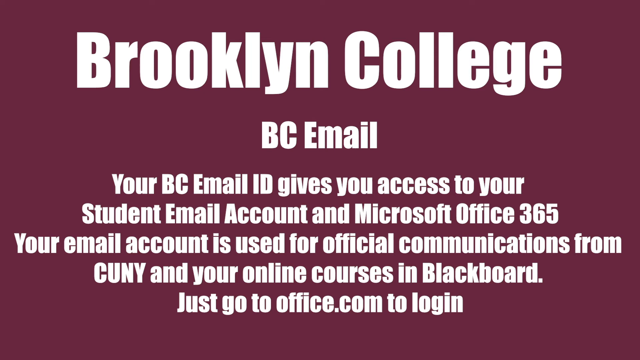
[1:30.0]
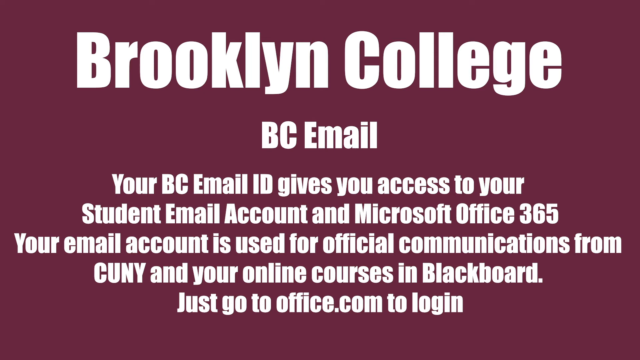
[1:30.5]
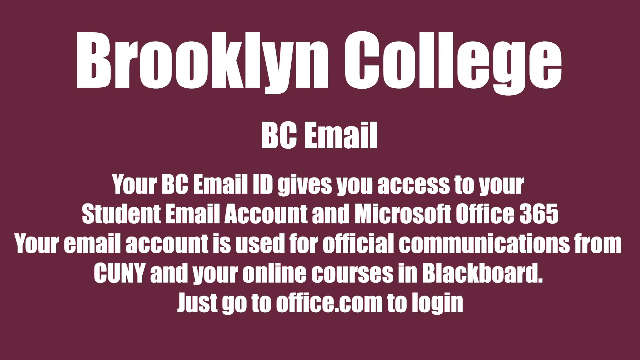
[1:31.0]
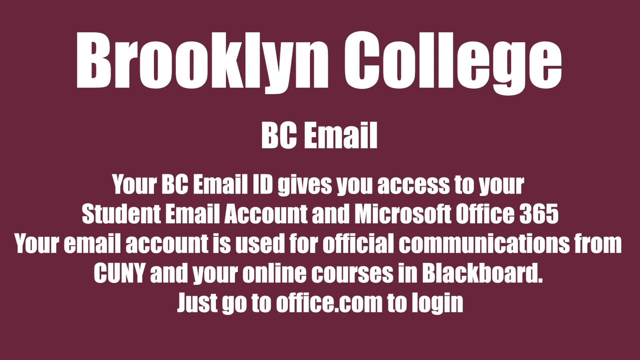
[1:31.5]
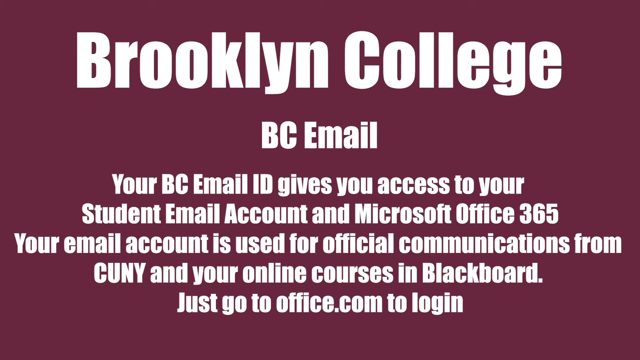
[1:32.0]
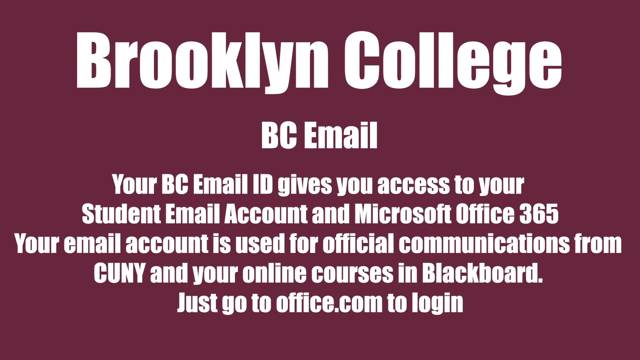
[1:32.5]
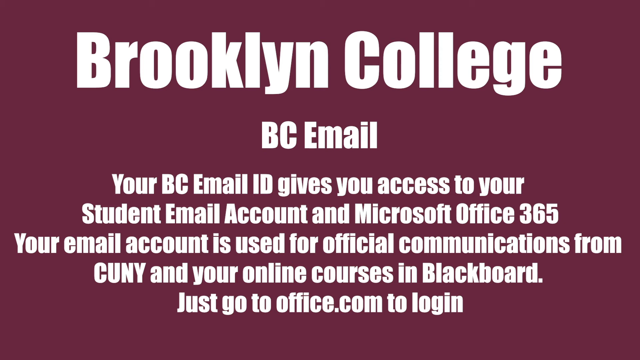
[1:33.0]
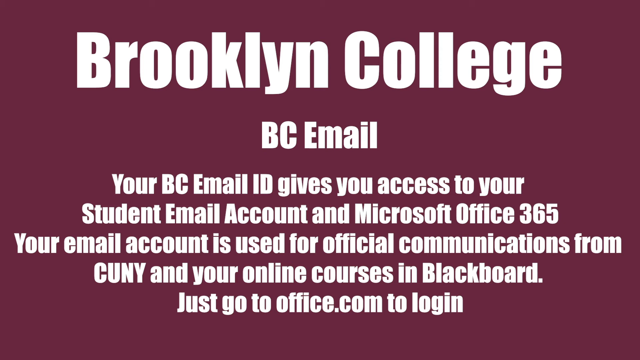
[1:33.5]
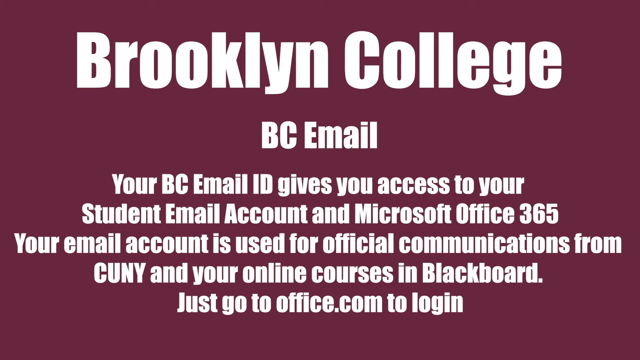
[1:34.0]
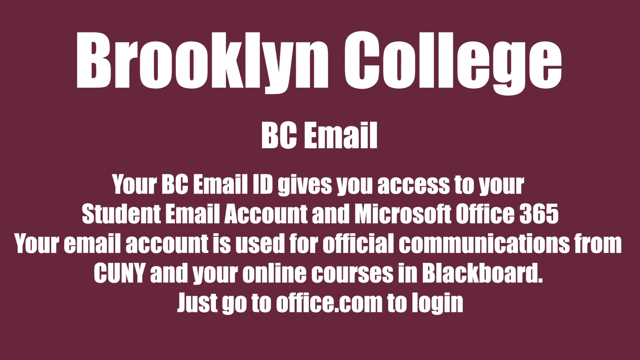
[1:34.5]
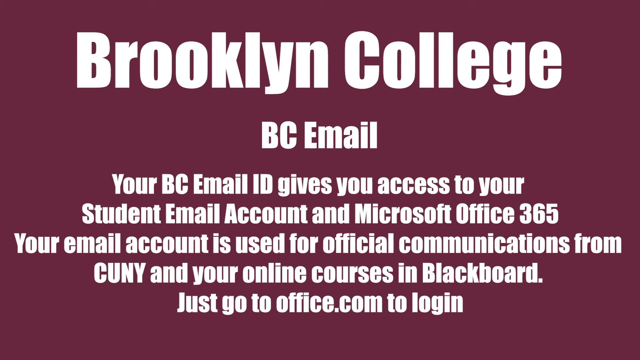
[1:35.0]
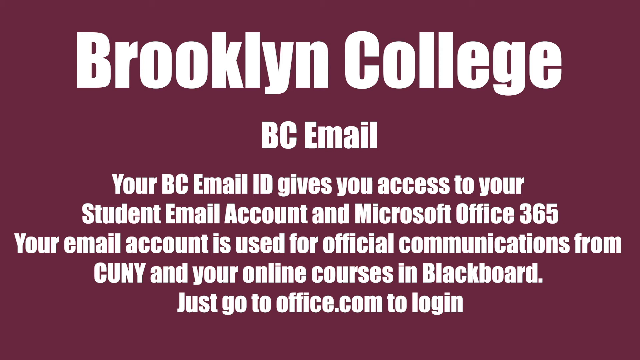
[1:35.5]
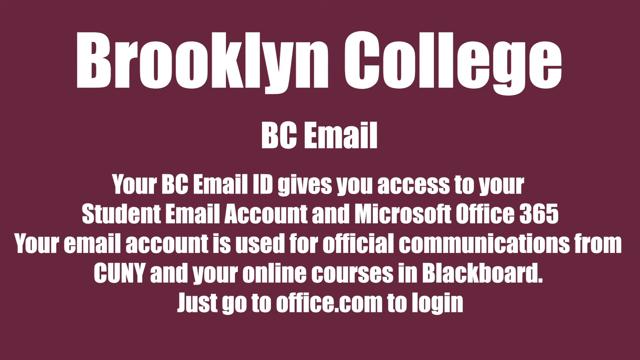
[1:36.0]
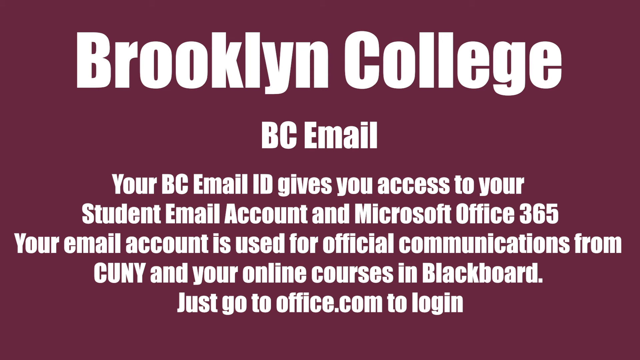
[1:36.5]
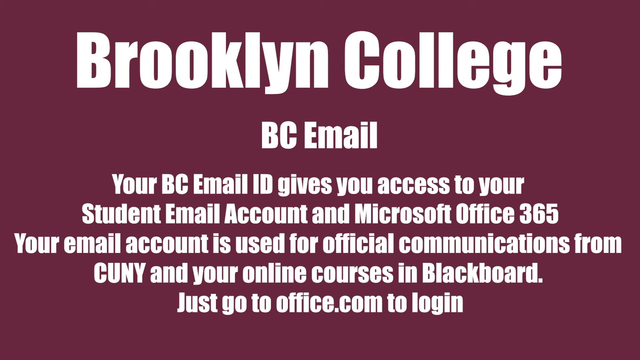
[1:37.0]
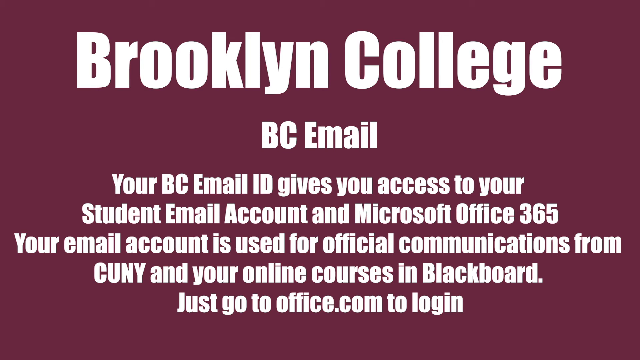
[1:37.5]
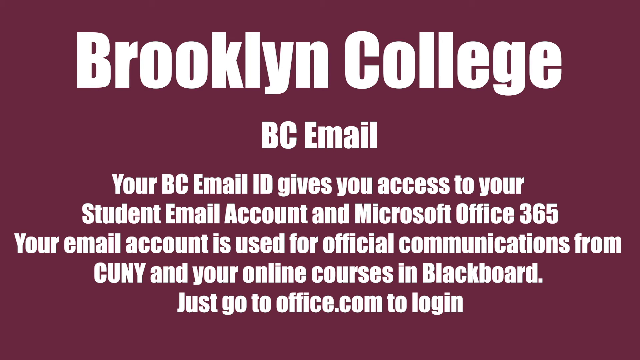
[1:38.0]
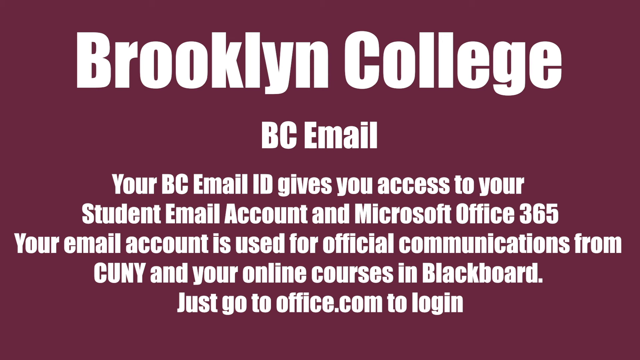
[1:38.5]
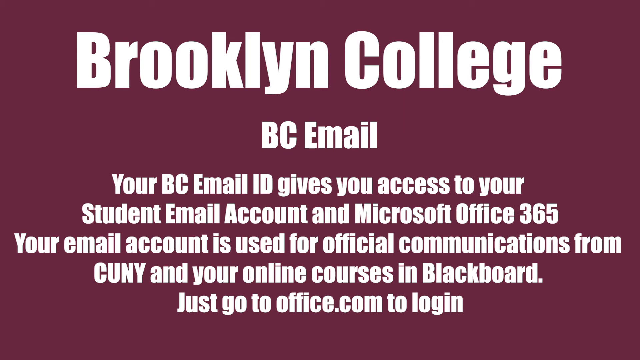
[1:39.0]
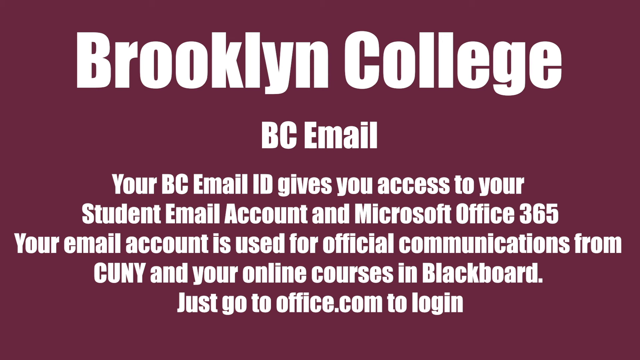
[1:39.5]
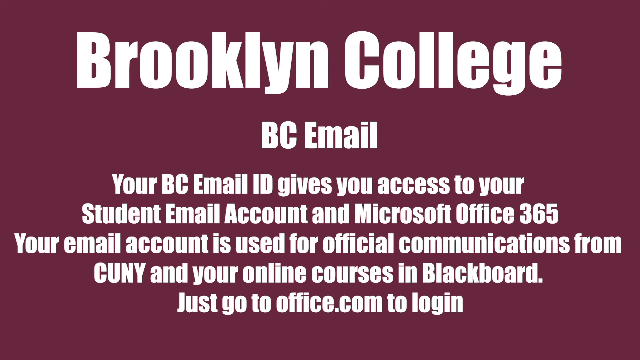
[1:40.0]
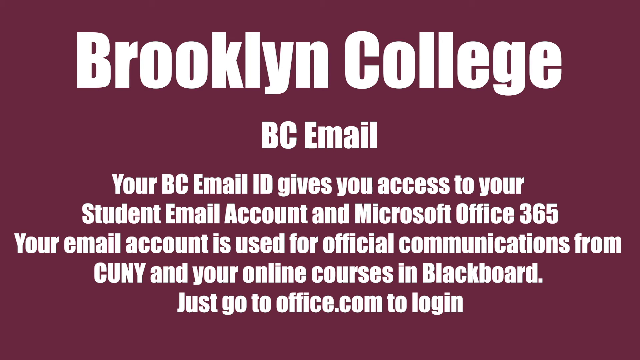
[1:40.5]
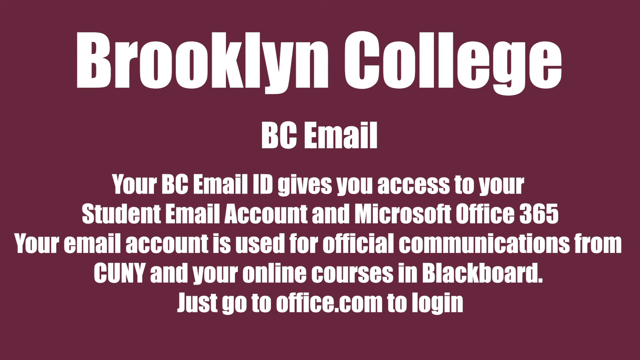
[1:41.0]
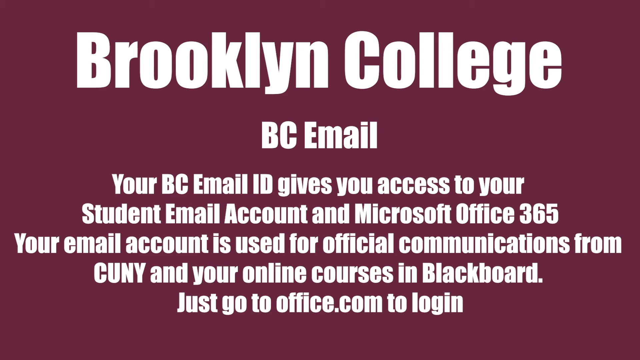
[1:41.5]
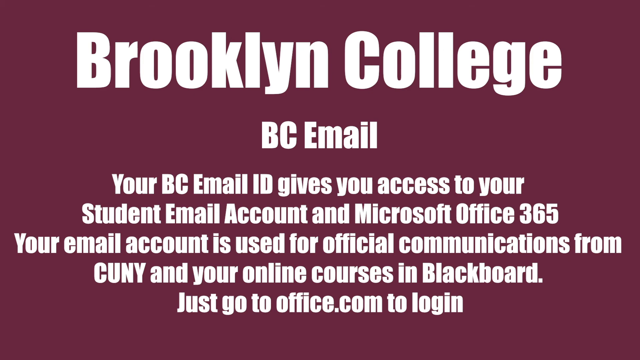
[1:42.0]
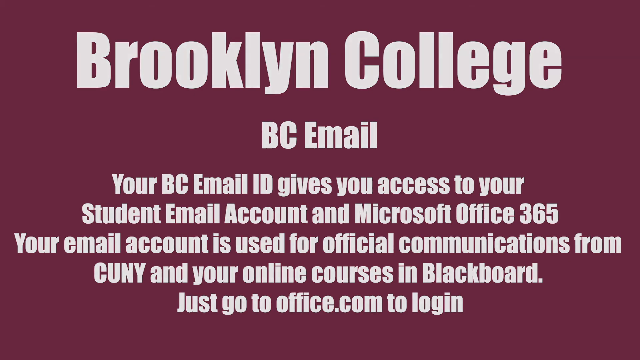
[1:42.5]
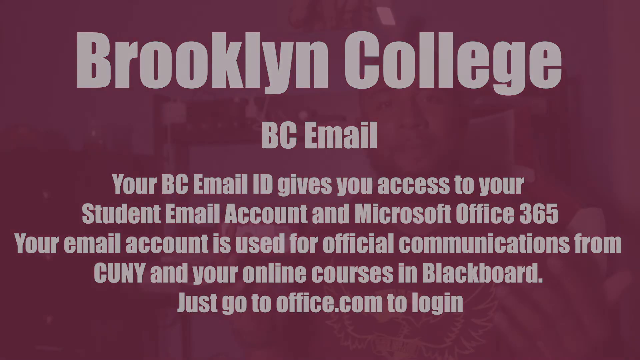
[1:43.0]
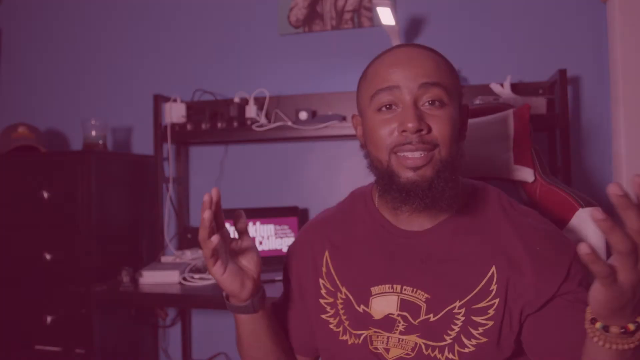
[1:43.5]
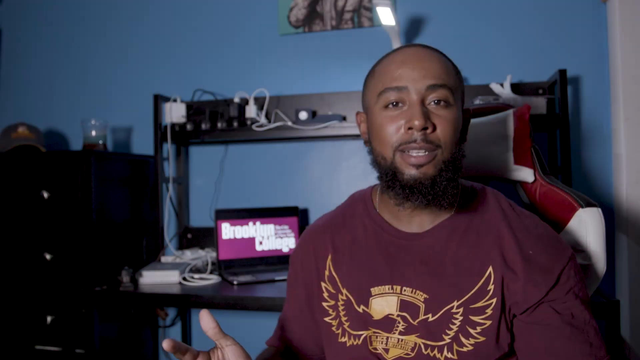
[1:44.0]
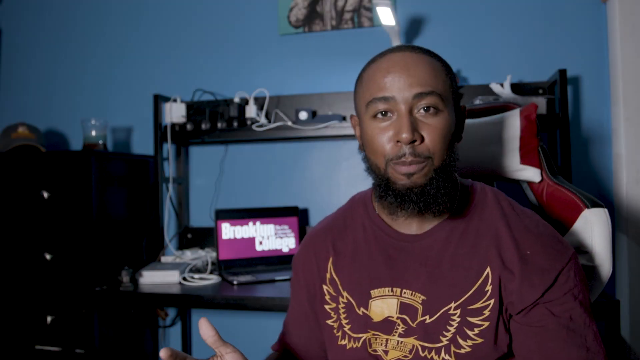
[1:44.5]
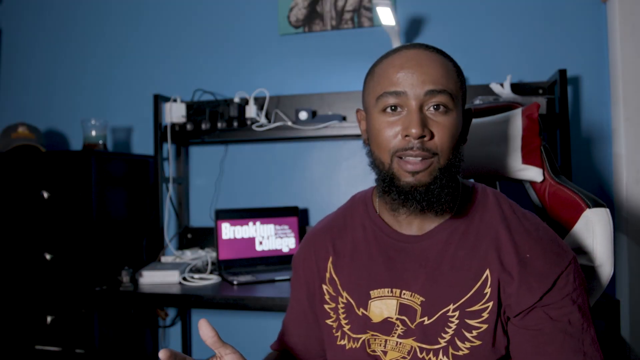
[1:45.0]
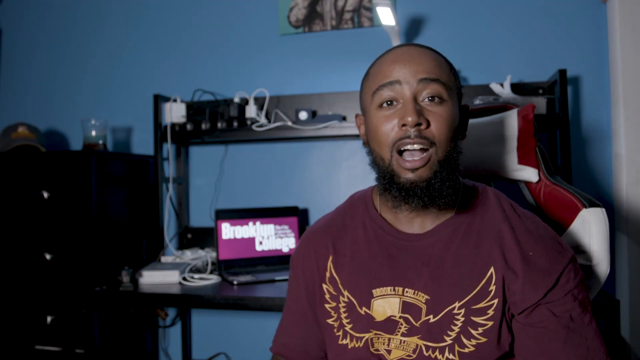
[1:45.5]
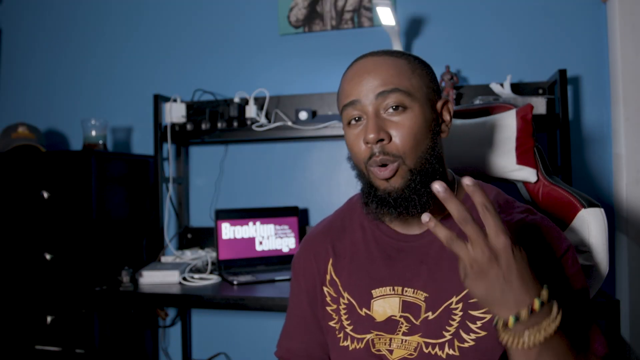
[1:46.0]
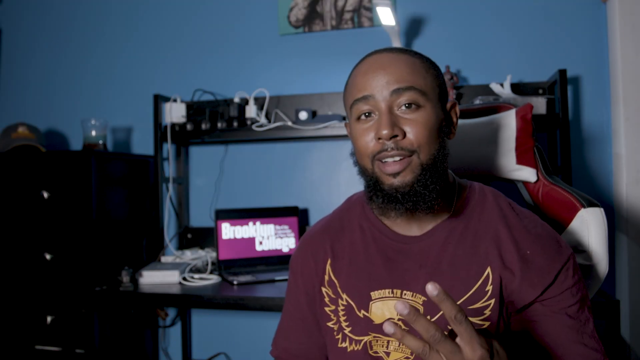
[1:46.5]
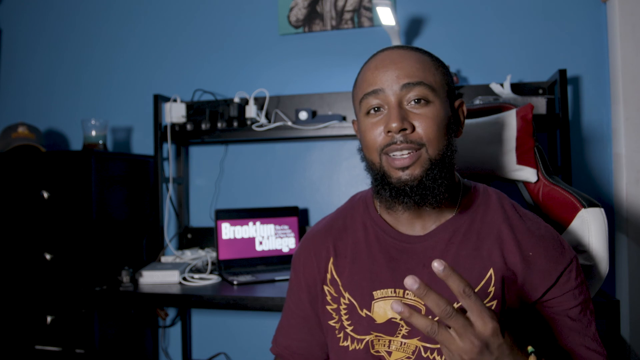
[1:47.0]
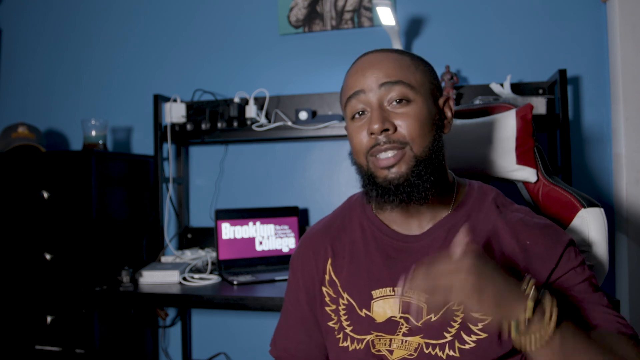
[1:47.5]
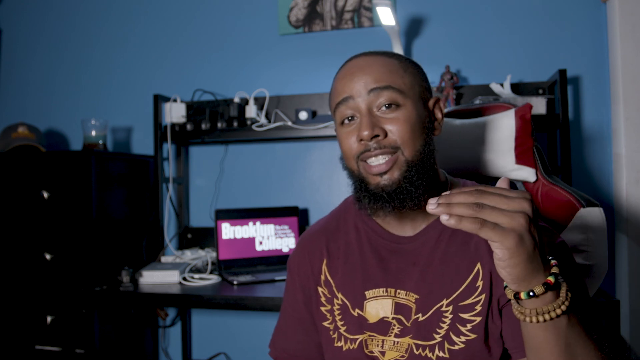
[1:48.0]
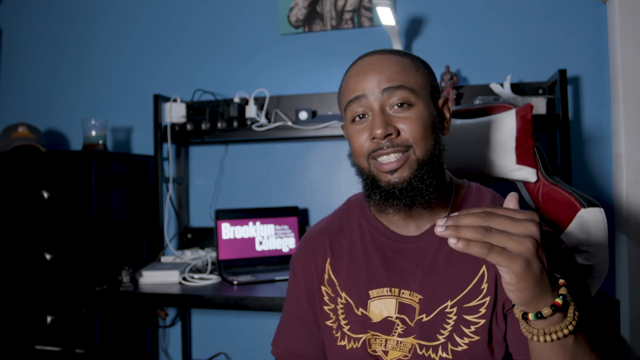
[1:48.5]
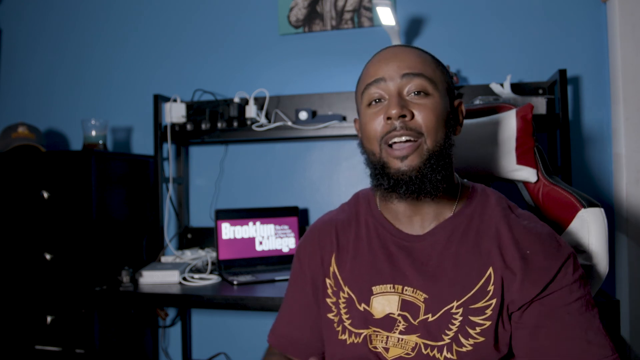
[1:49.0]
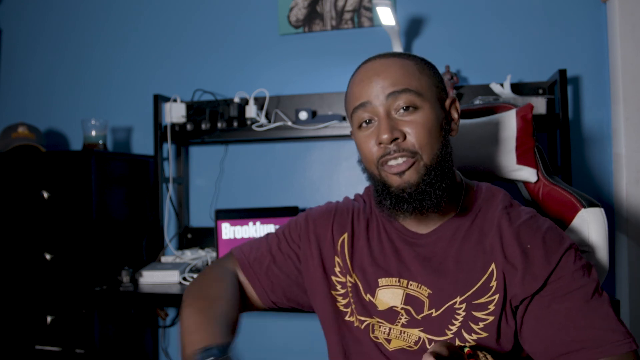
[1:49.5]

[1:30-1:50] The same Brooklyn College ad stays on screen for a long time, then the video cuts back to the man for about five seconds. When he raises his left hand, two bracelets are visible on his left wrist: the one closest to his hand has a colorful pattern that looks sort of Jamaican, in red, gold, and green, and the other is a basic beige-cream color.